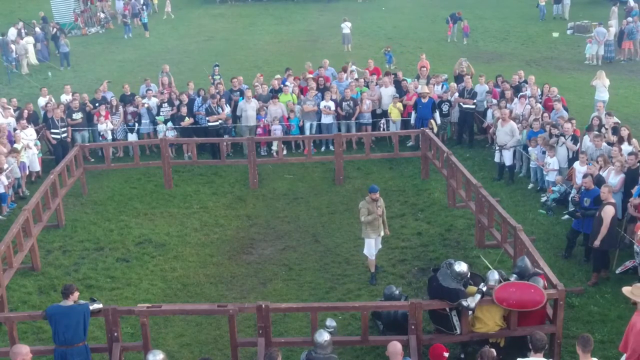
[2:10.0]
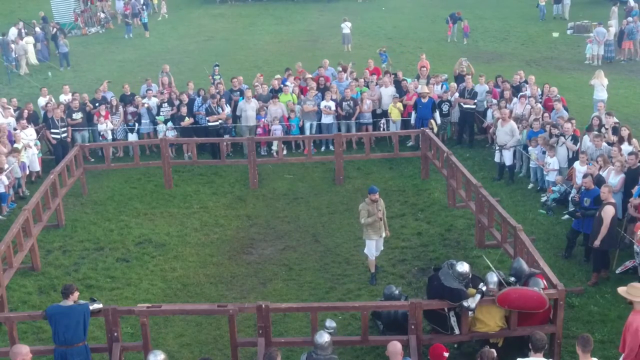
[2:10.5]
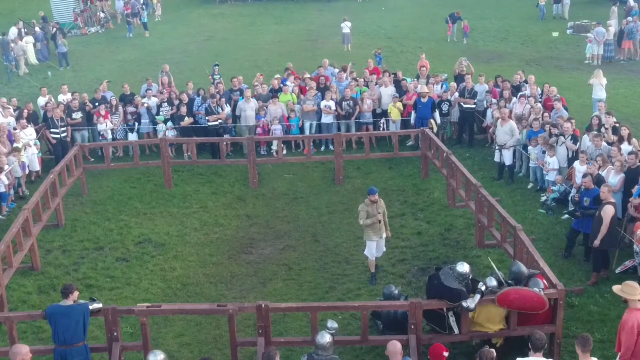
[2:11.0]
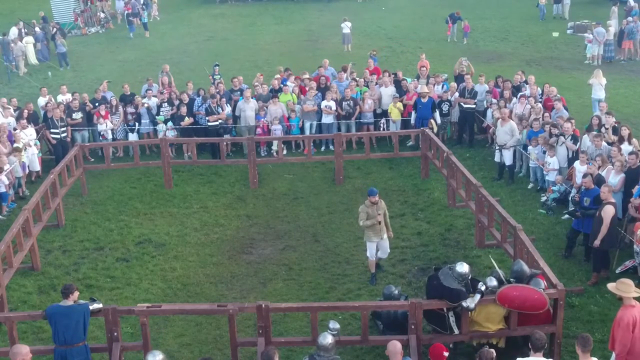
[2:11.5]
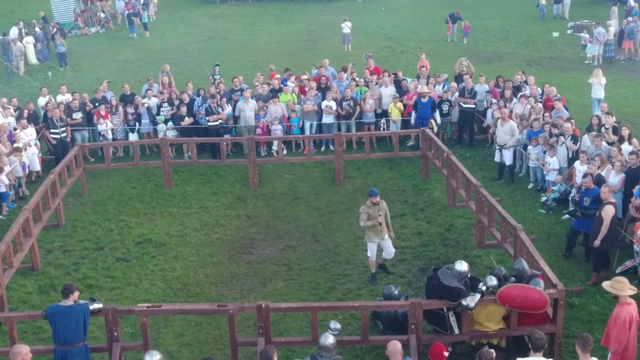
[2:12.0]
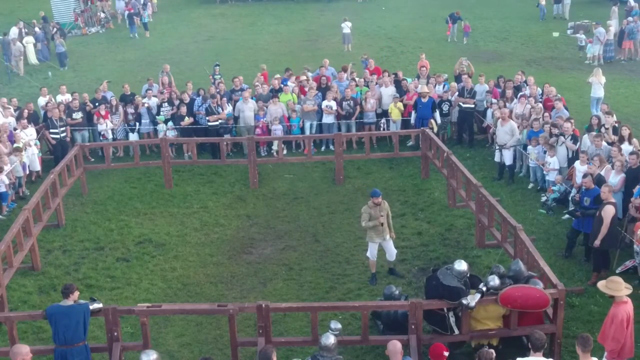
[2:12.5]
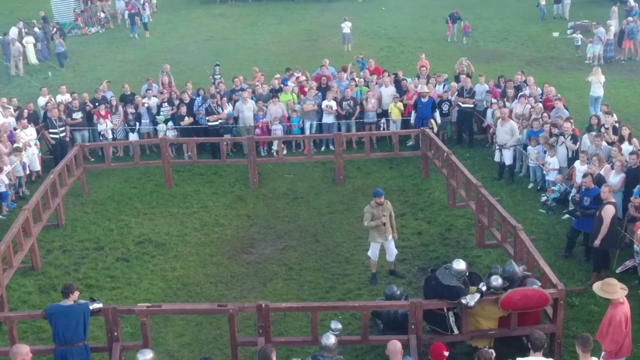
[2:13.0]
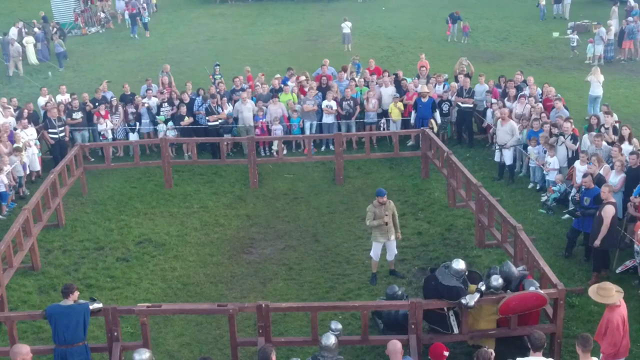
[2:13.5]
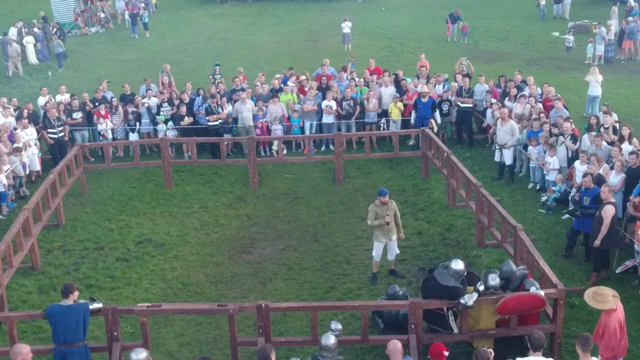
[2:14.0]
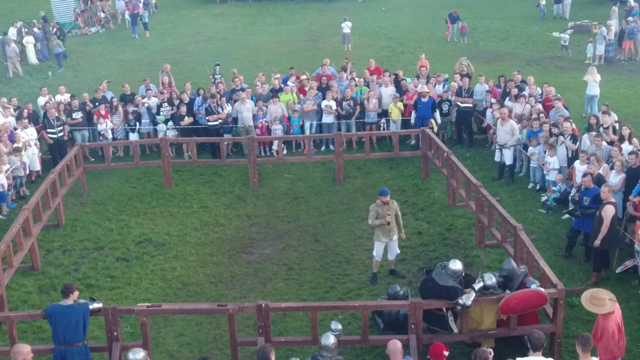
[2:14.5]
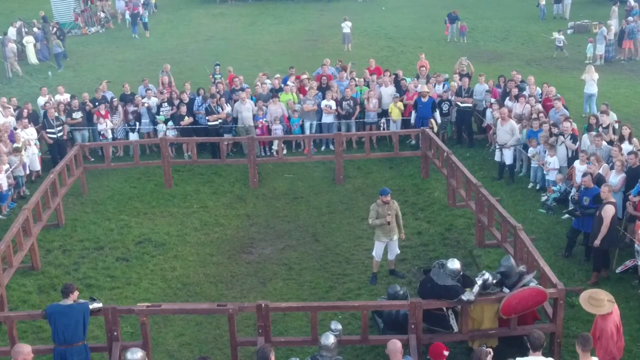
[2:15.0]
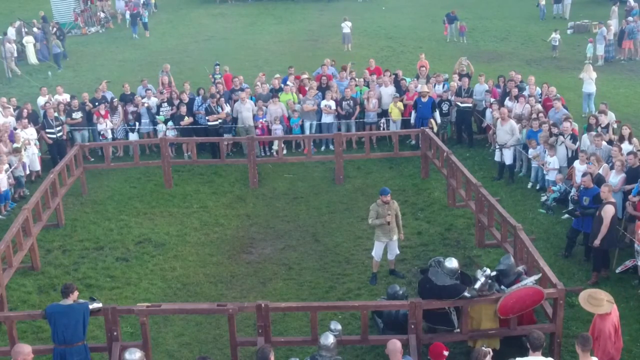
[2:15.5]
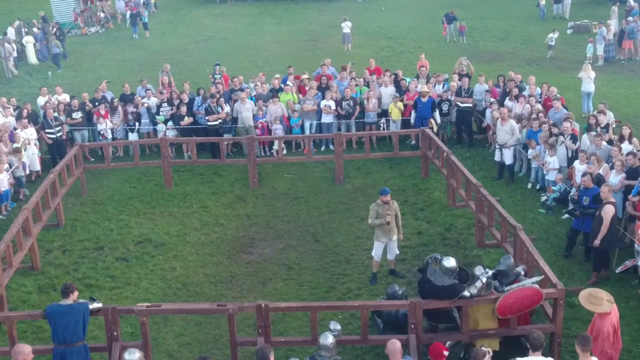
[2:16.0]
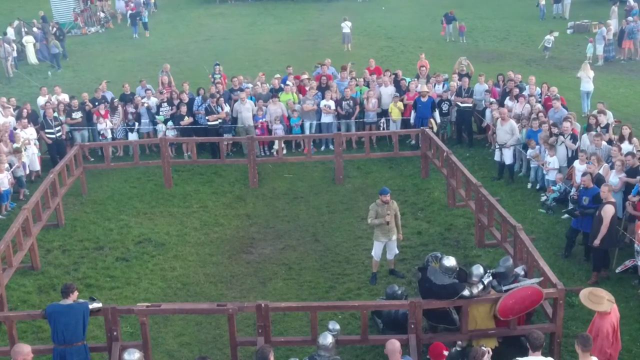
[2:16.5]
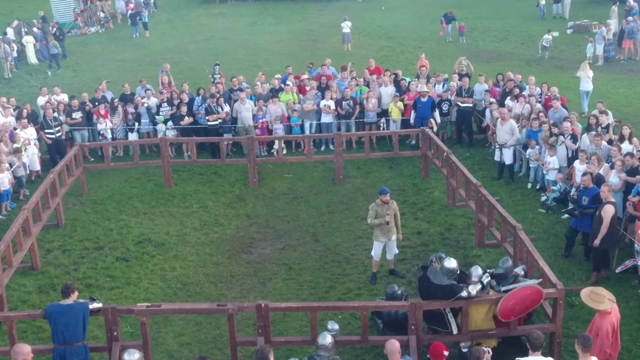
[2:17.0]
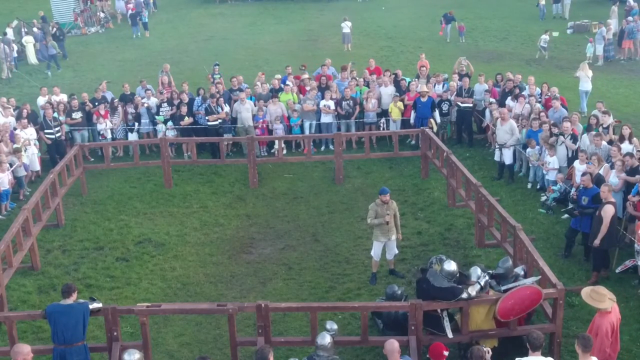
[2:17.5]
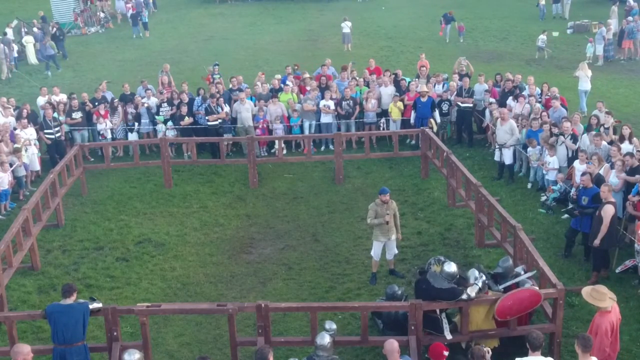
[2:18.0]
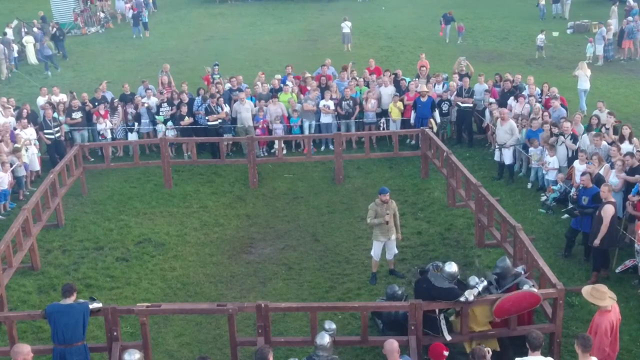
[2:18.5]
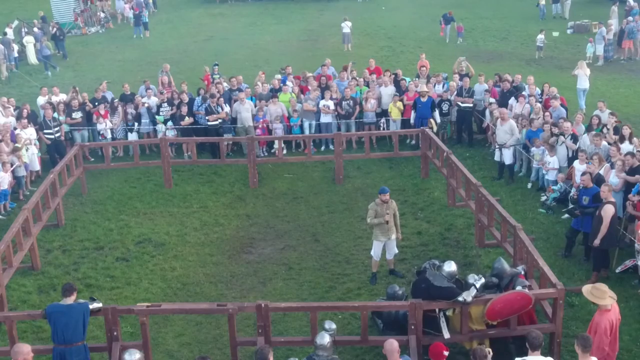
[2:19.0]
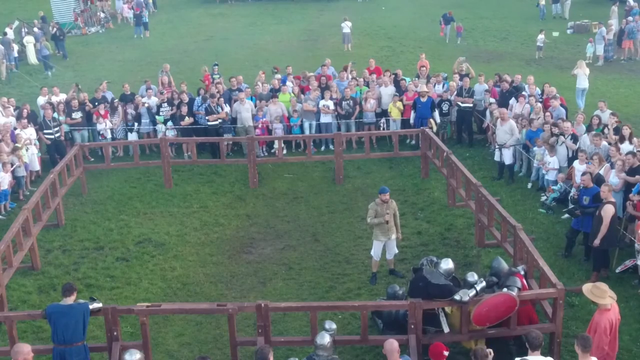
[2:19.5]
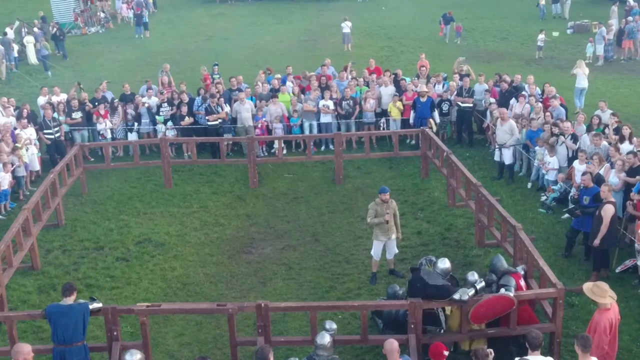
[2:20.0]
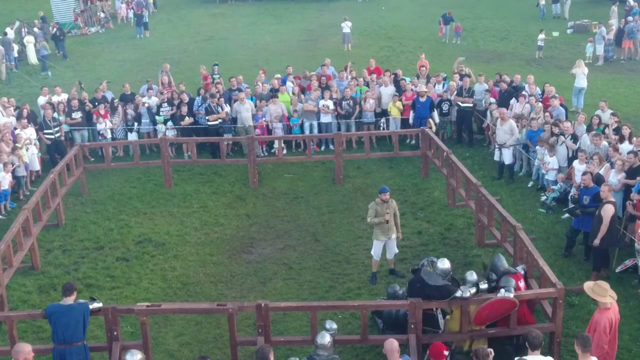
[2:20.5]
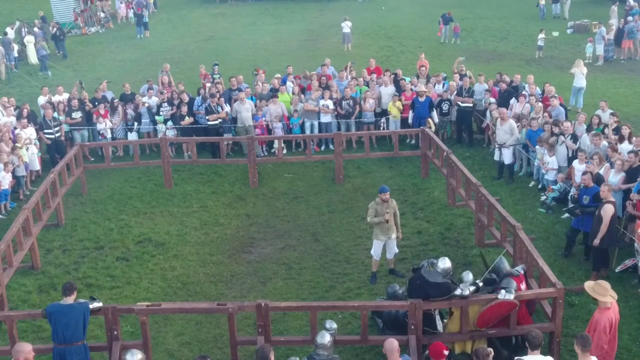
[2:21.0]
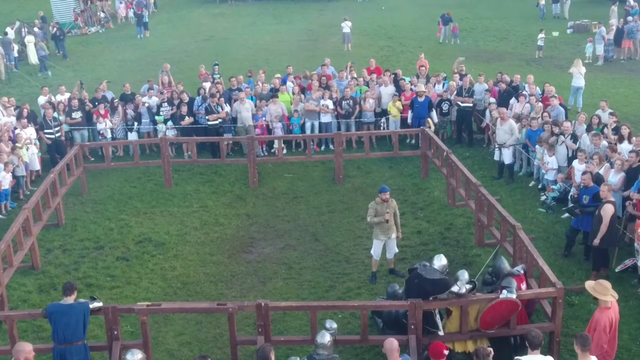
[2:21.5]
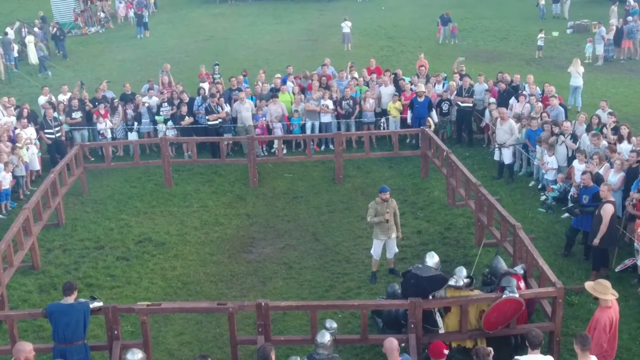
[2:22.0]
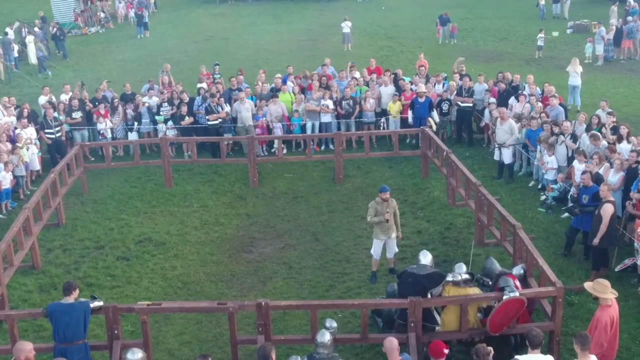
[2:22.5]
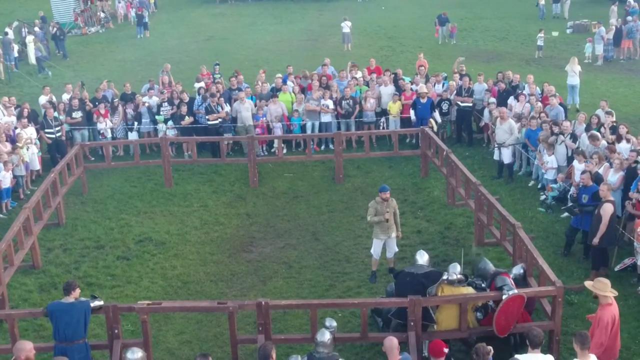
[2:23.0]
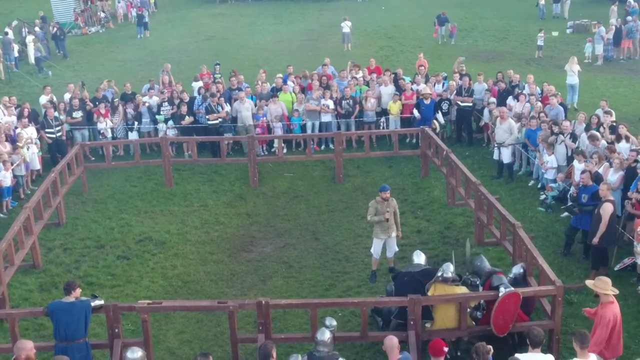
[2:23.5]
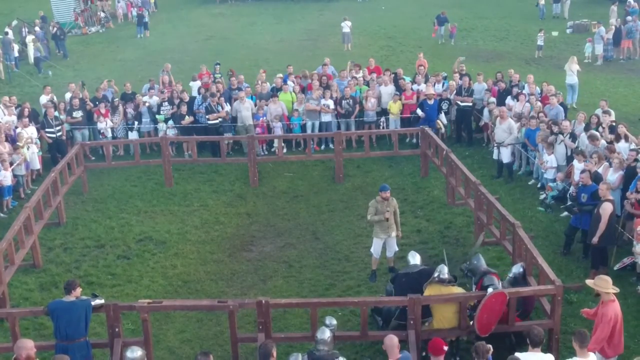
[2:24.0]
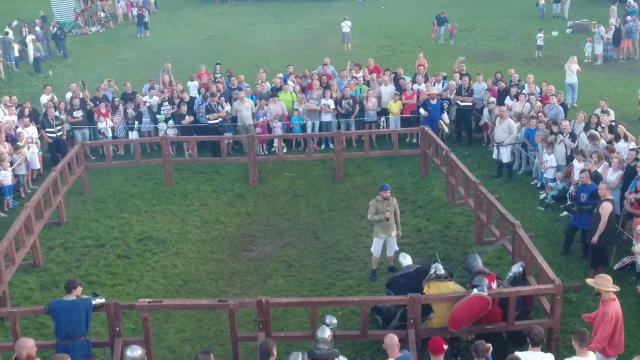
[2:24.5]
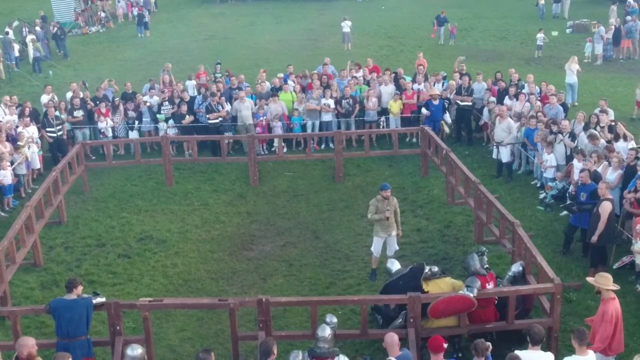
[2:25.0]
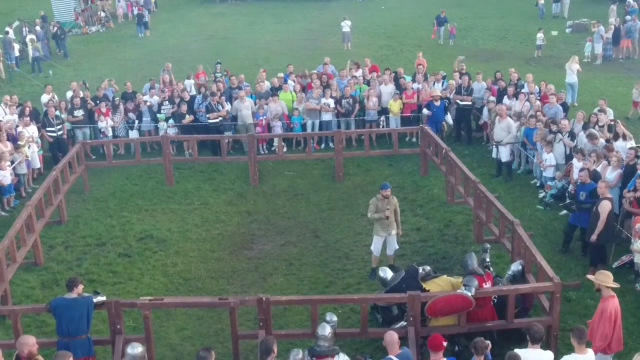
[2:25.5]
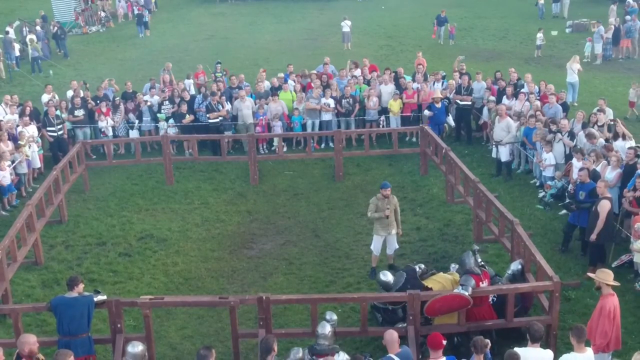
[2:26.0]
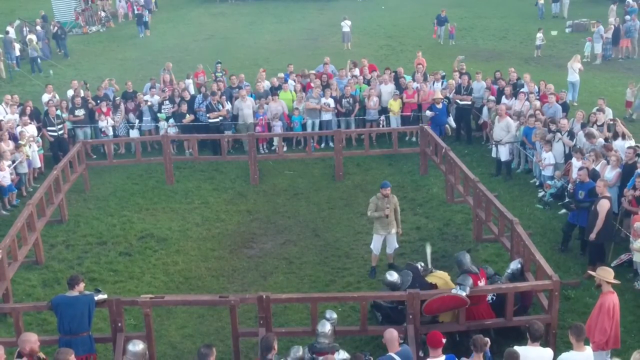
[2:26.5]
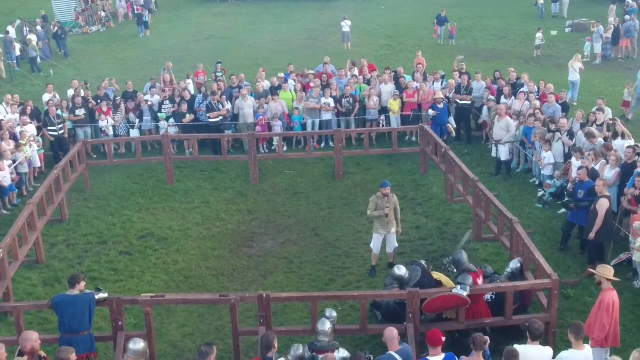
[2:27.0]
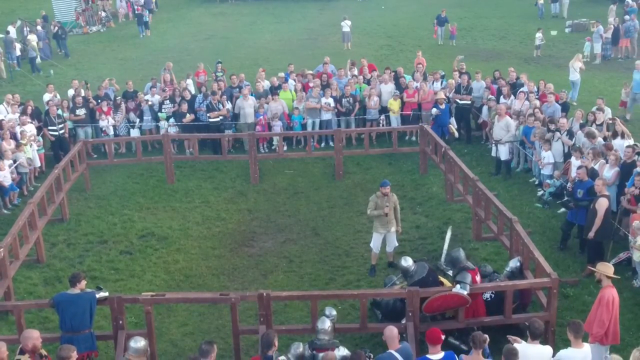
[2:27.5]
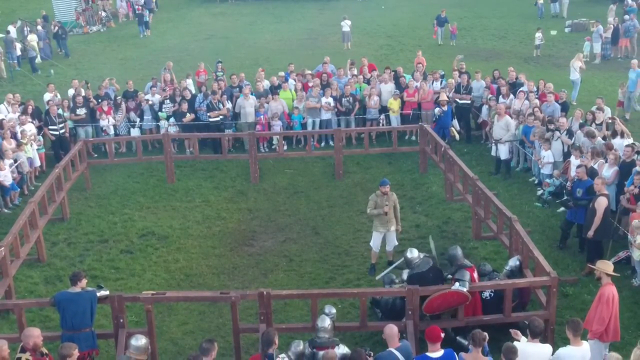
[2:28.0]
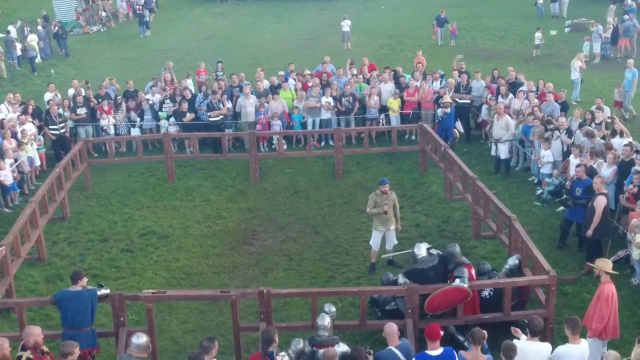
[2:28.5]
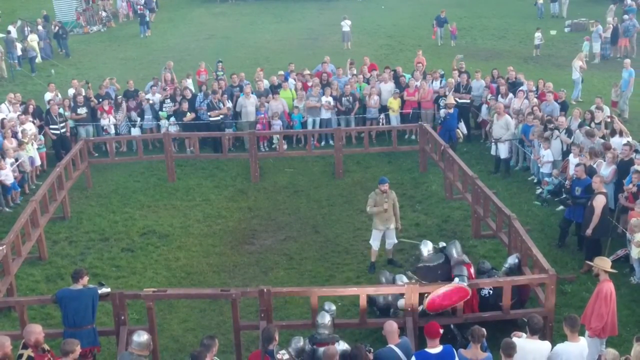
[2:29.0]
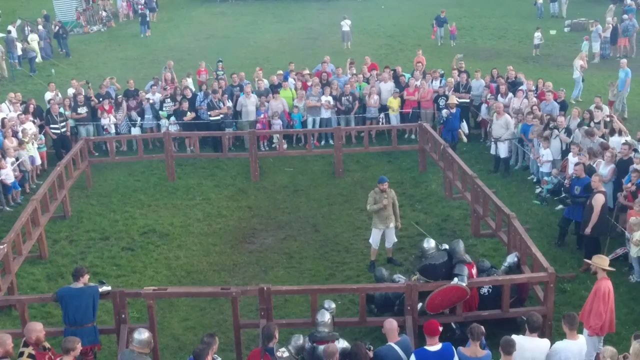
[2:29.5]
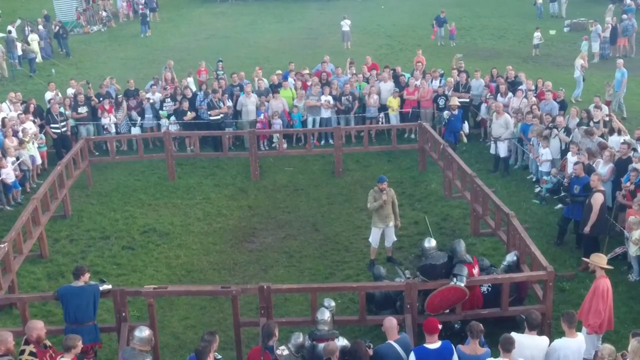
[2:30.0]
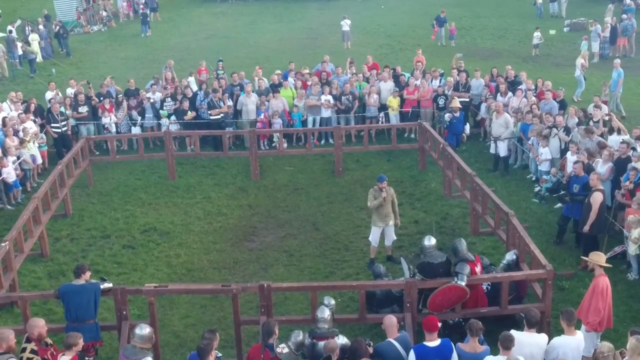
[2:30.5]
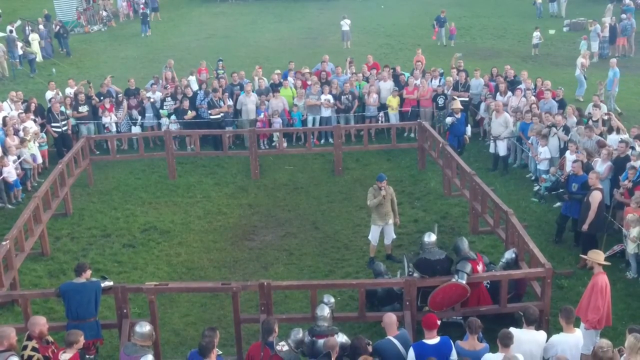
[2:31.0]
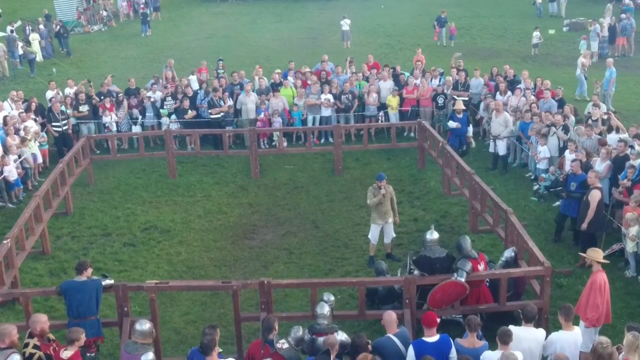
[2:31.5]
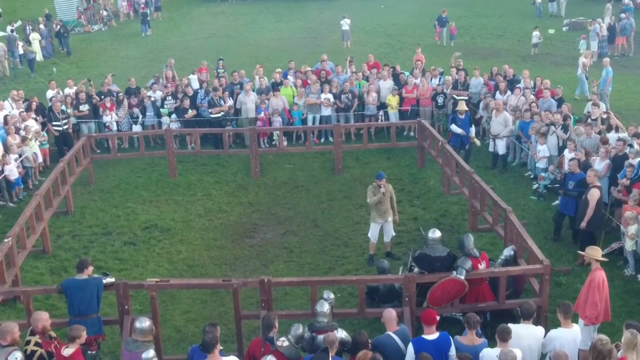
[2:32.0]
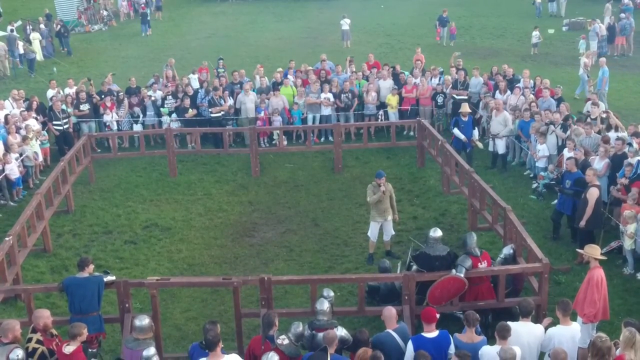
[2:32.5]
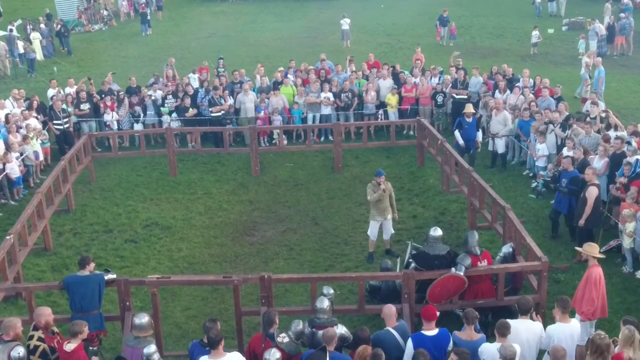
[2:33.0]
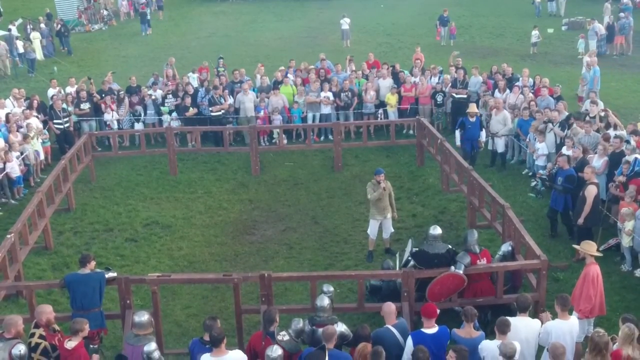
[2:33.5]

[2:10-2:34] The knight in black and the knight in red appear to pin the knight in yellow against the railing. The non-combatant is now standing very close to the action, holding something in his hand, possibly a microphone. The two knights continue to grab the knight in yellow and appear to pull him over to the left. The one in dark blue appears to have him in a headlock. He seems to break free and move forward, but disappears from view as that happens, appearing to fall into one of the other knights that were sitting on the ground. Meanwhile, the knight in red leans backward against the railing, and the knight in dark blue leans forward. The knight in red has his sword in the railing, with the shield hanging over the railing. The one in blue seems to be holding his sword and shield directly in front of him.